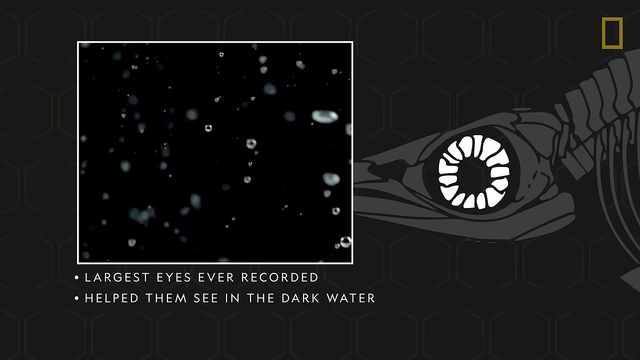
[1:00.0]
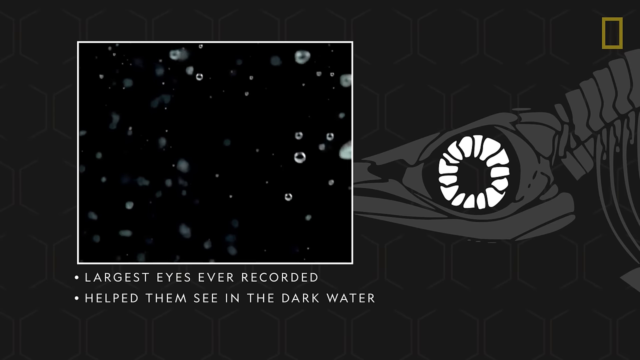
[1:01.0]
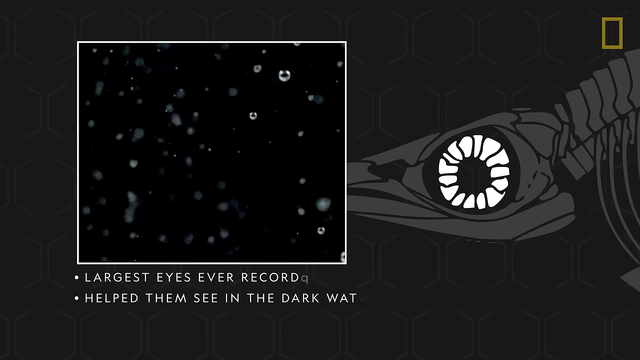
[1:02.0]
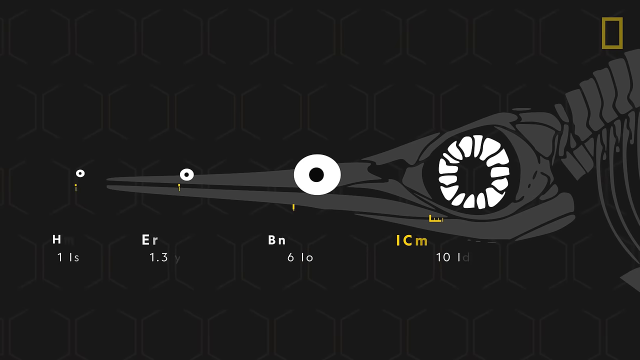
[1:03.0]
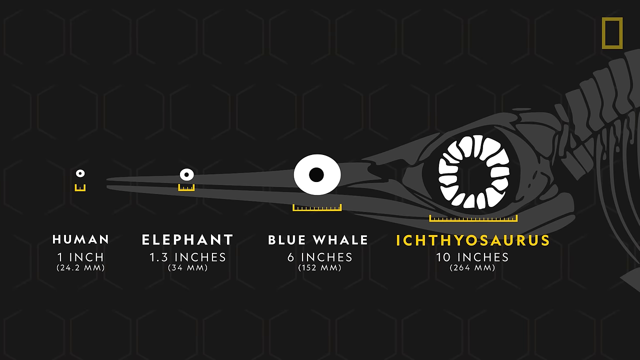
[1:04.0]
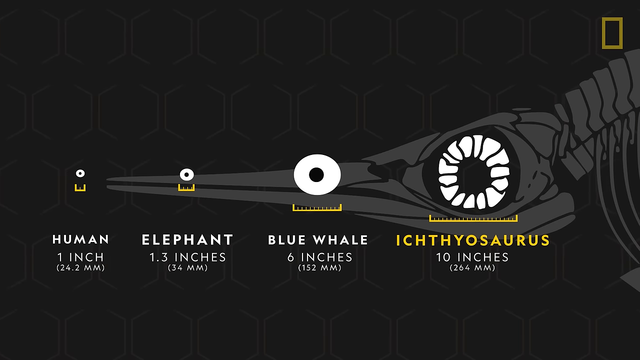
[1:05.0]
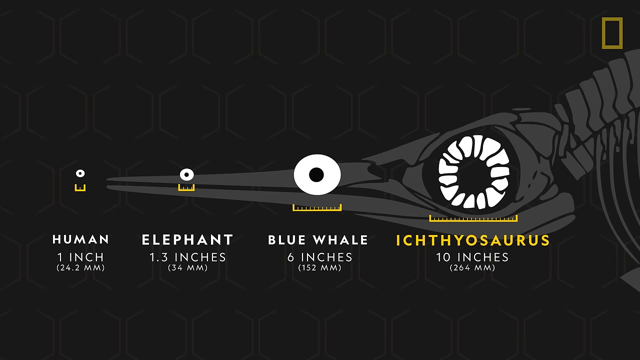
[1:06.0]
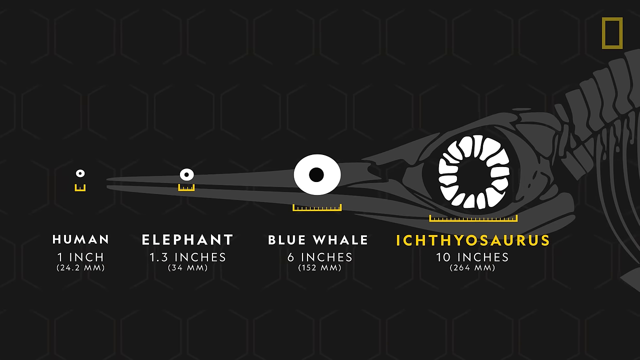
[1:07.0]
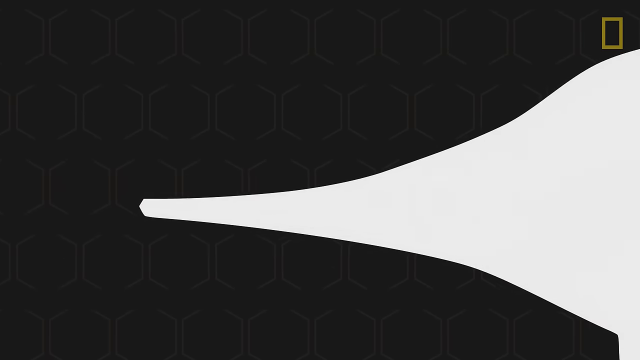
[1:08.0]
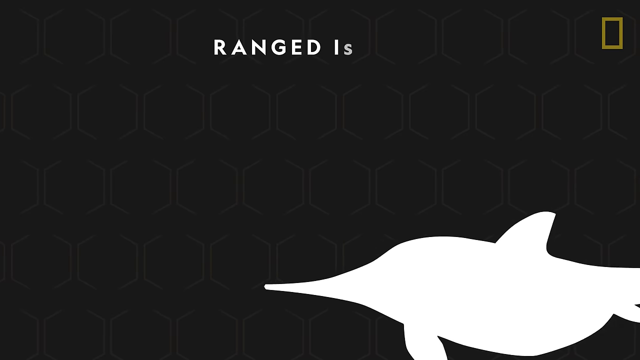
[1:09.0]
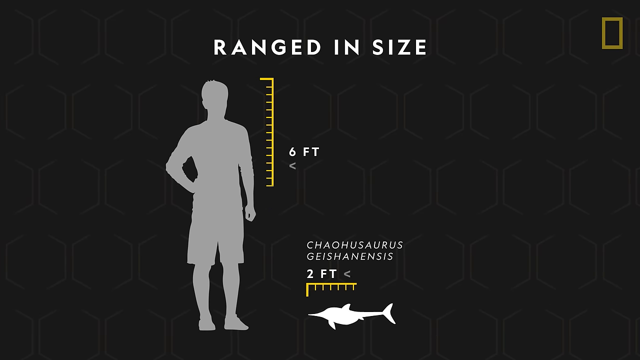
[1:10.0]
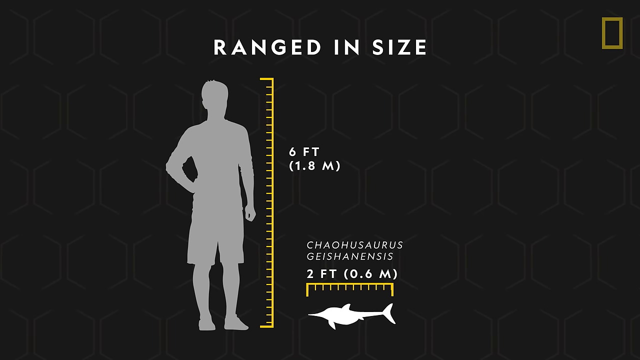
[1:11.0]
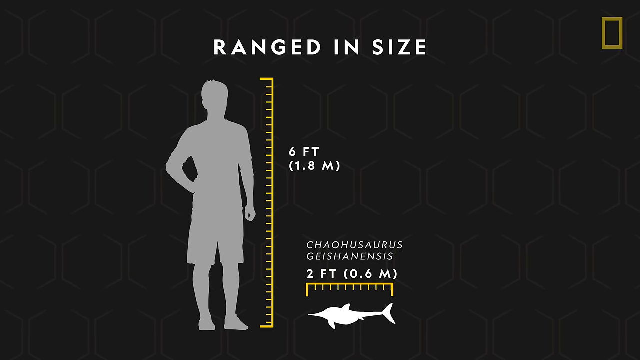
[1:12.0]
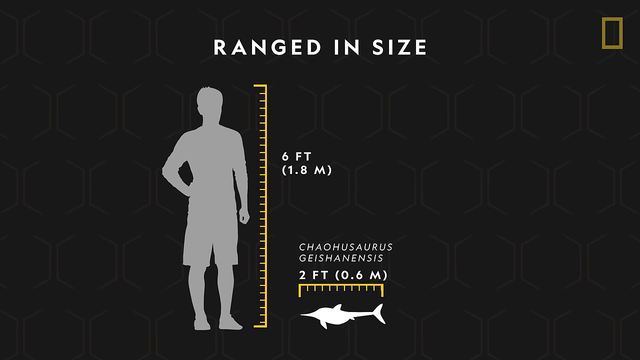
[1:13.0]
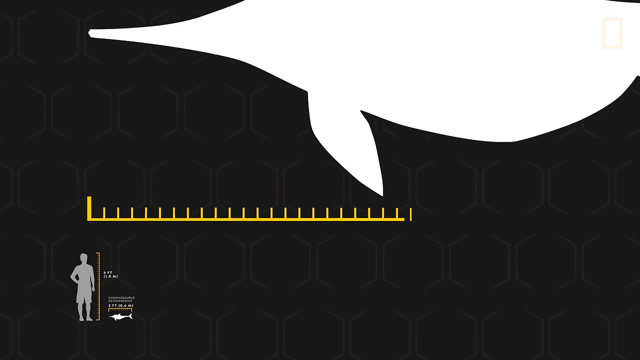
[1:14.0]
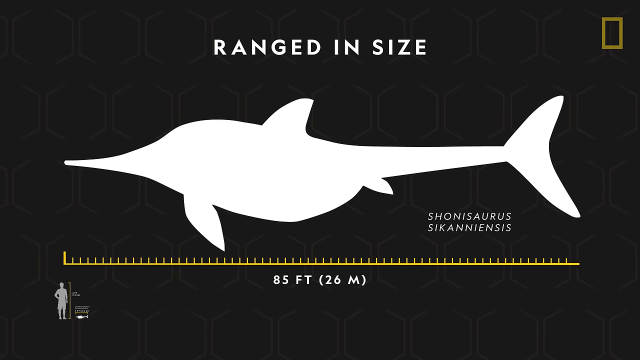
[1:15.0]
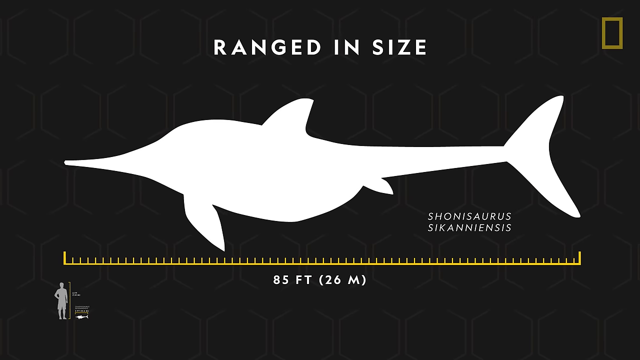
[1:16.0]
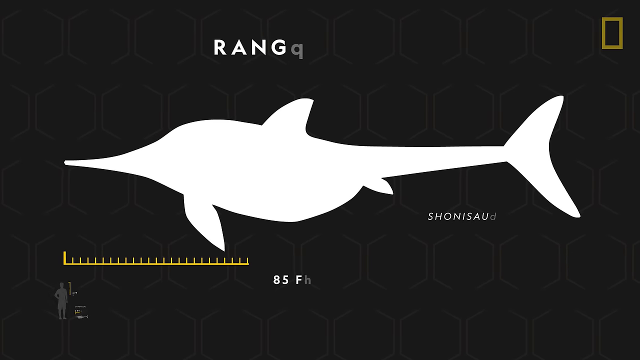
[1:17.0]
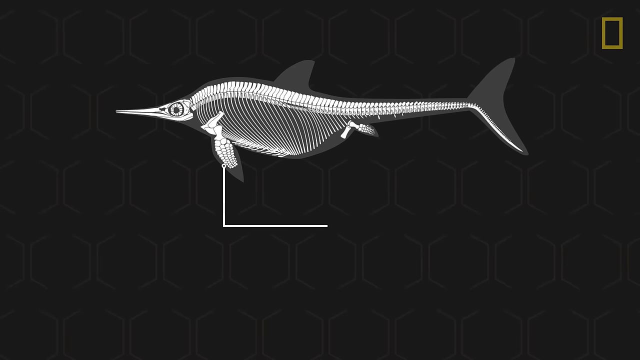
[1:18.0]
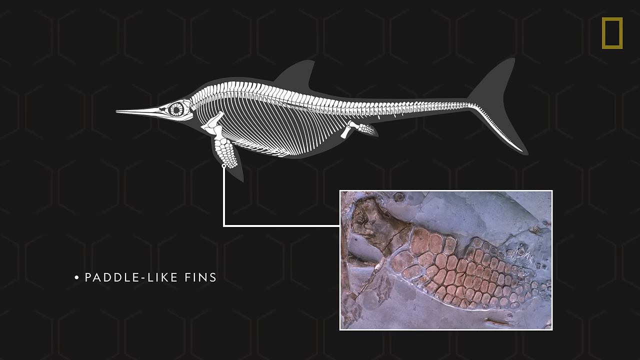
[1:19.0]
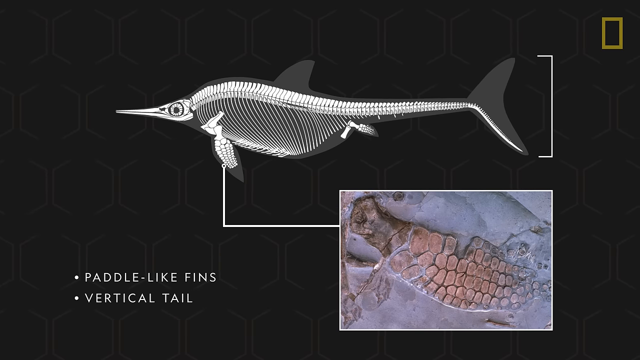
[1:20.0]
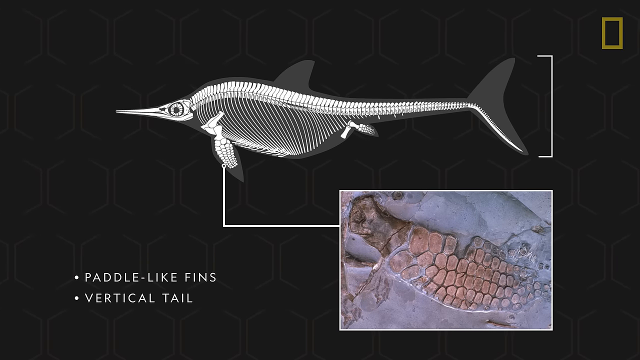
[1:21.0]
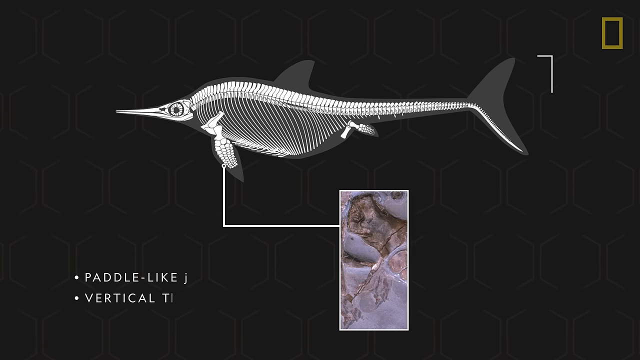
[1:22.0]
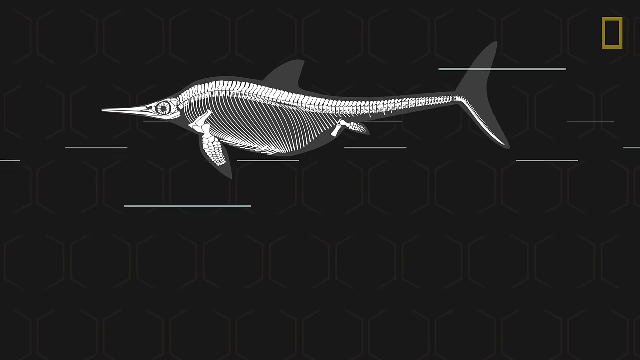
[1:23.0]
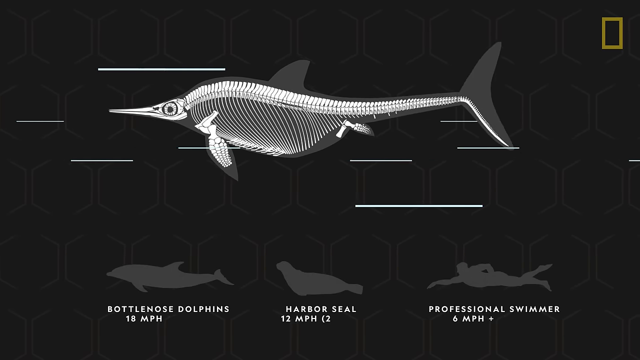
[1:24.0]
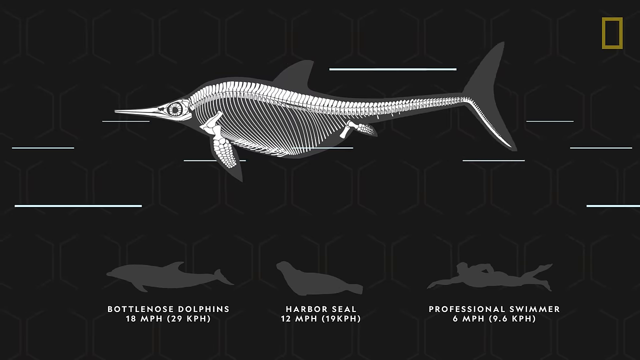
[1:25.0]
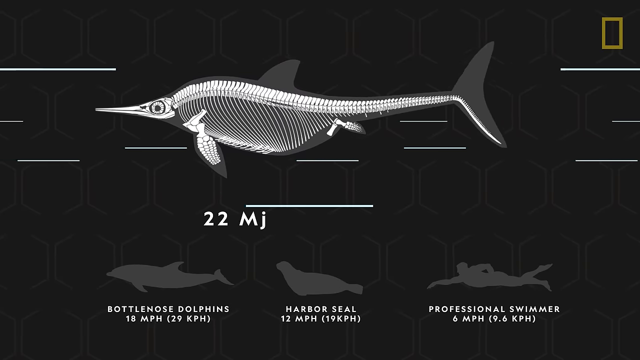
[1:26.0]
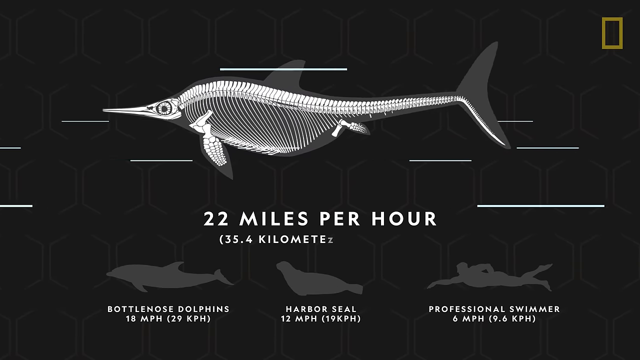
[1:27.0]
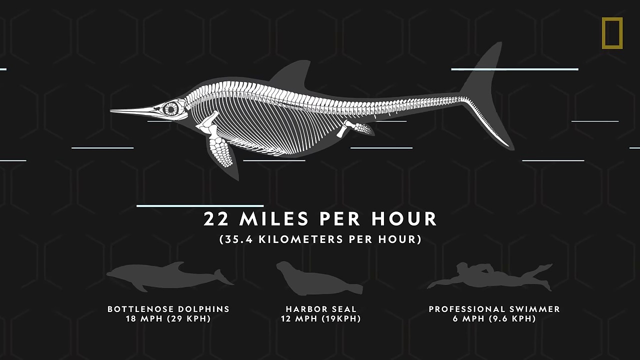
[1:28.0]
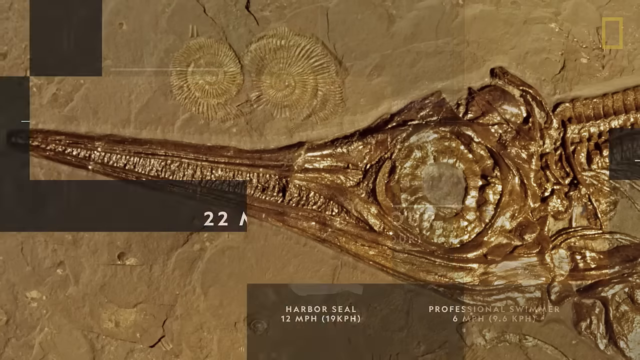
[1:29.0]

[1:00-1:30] The image zooms in on a creature's eye. A zoomed-in photo shows various black dots and bubbles in pitch-black water, labeled "largest eyes ever recorded, help them see in the dark". A comparison follows of the eyes of various present-day creatures with the ichthyosaurus's eye: the human eye is labeled at one inch, an elephant's eye at 1.3 inches, a blue whale's eye at six inches, and the ichthyosaurus's eye at 10 inches. The measurements disappear and the image of the ichthyosaurus zooms out, showing the fish creature next to a human for scale: it ranged to two feet long, while an average human is six feet. It zooms out even further to show a different creature labeled "Shownisaurus sicaniensis" at 85 feet. A photograph of the creature's fin is then shown.